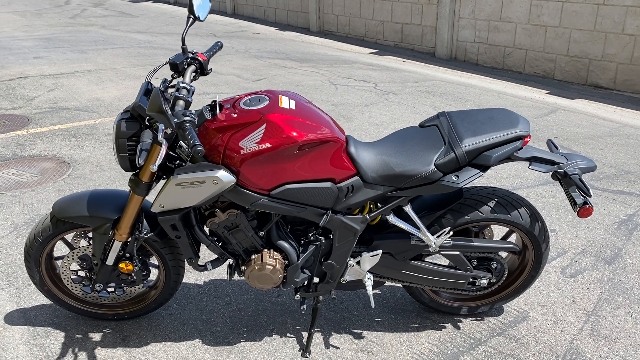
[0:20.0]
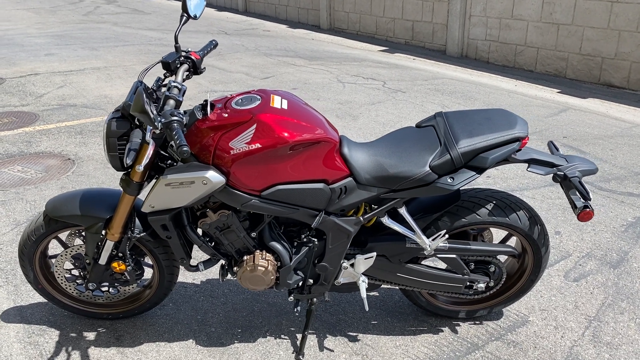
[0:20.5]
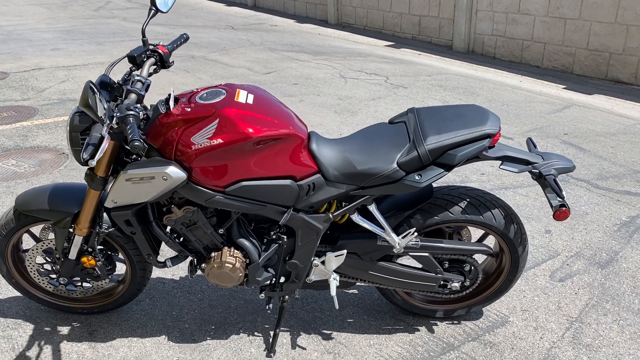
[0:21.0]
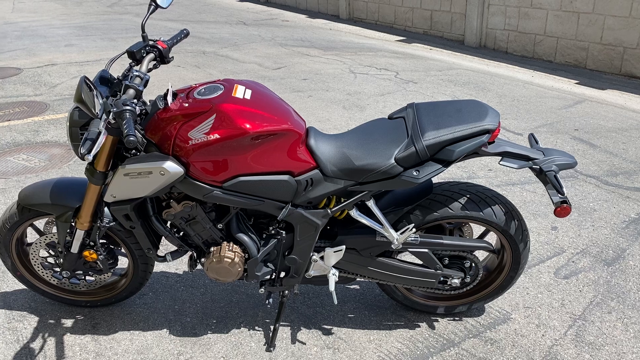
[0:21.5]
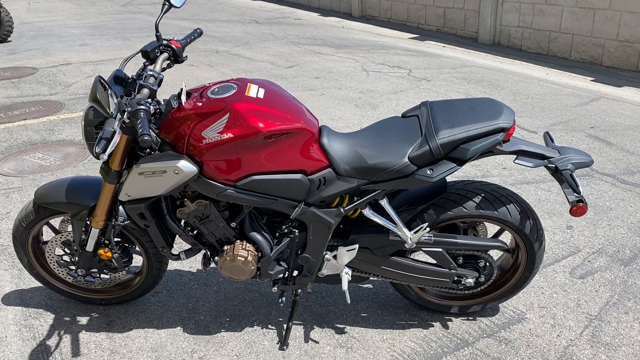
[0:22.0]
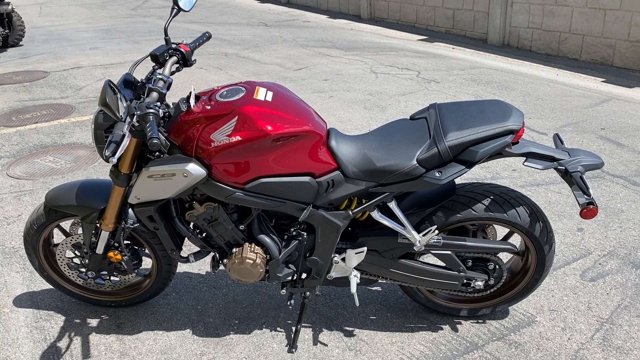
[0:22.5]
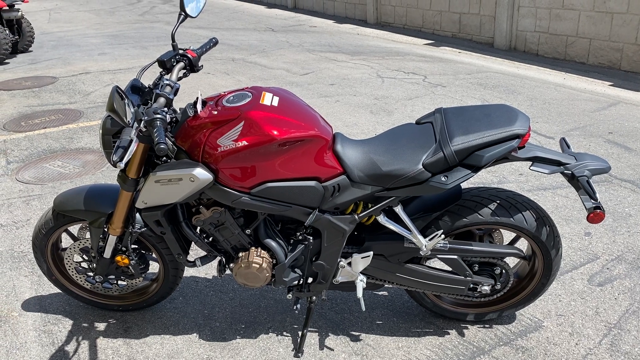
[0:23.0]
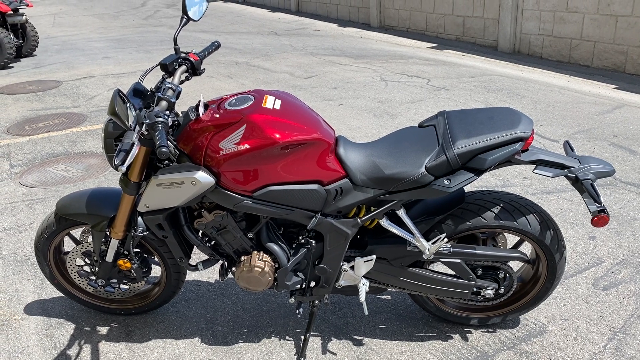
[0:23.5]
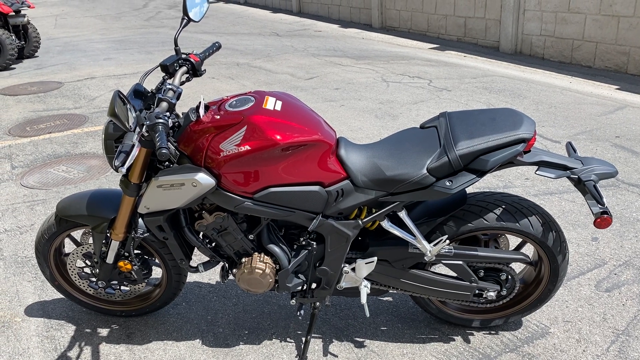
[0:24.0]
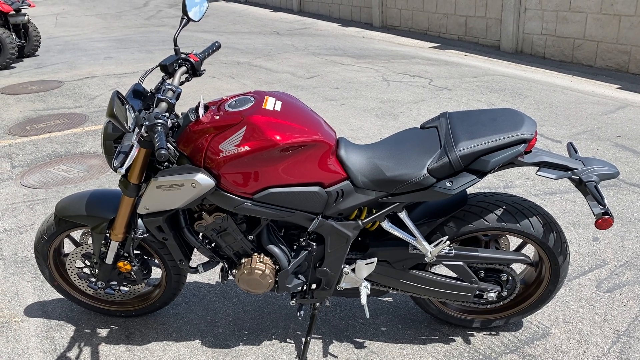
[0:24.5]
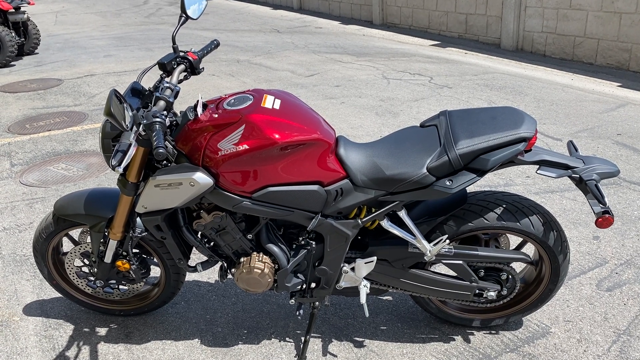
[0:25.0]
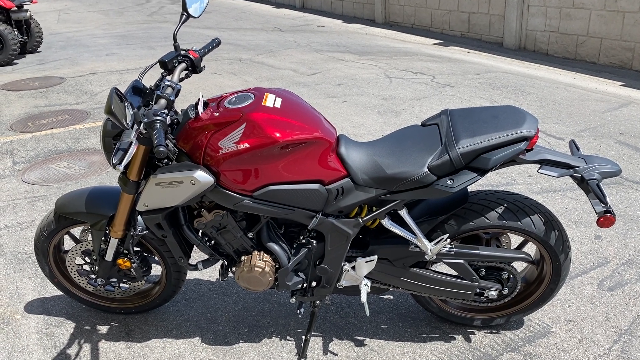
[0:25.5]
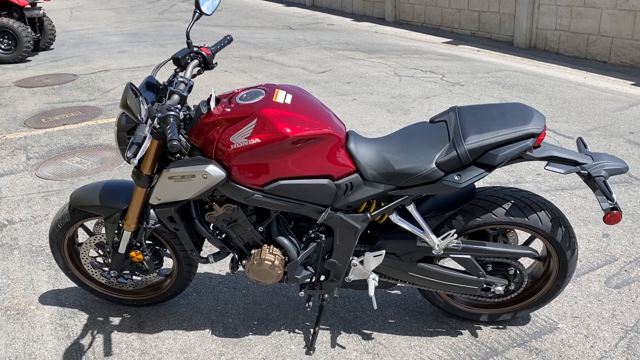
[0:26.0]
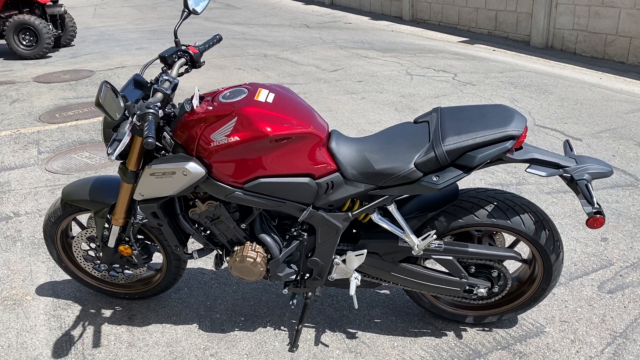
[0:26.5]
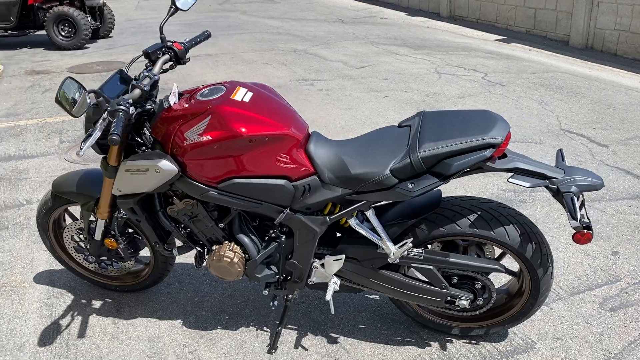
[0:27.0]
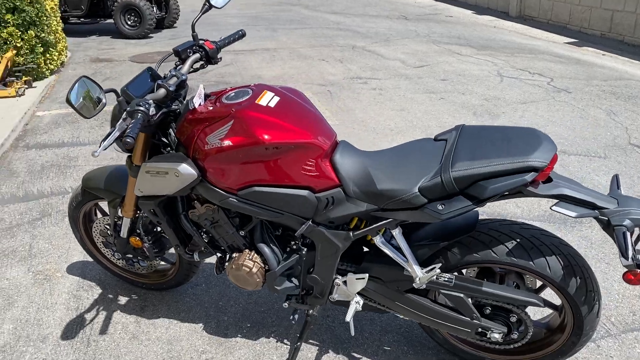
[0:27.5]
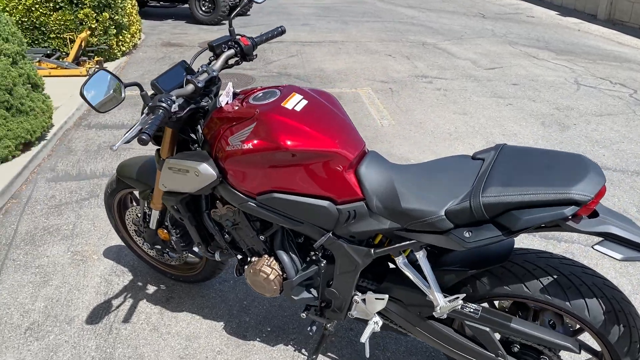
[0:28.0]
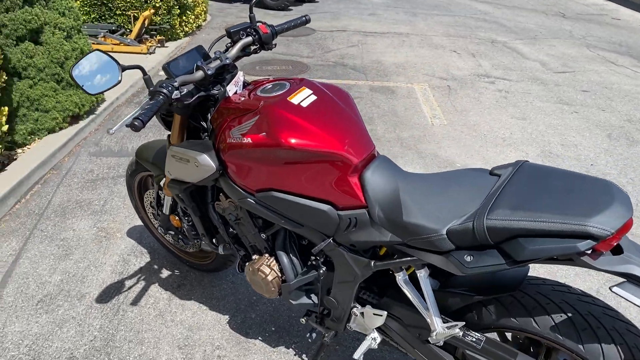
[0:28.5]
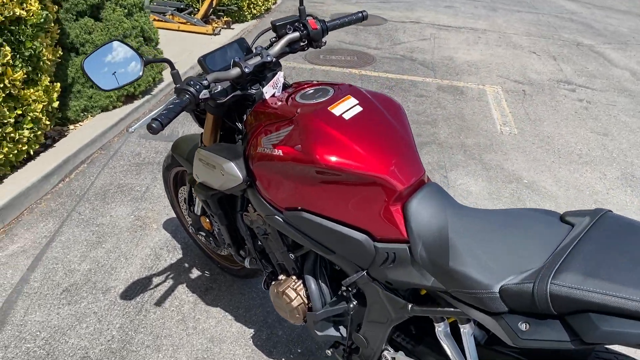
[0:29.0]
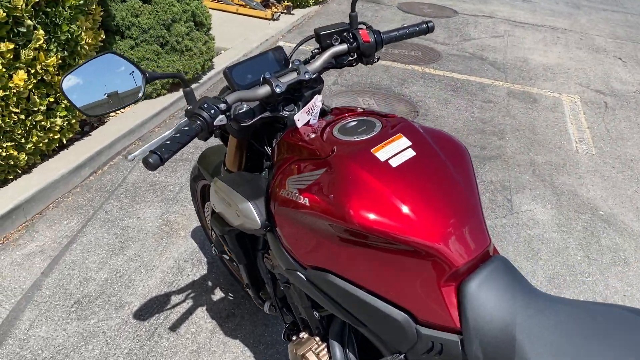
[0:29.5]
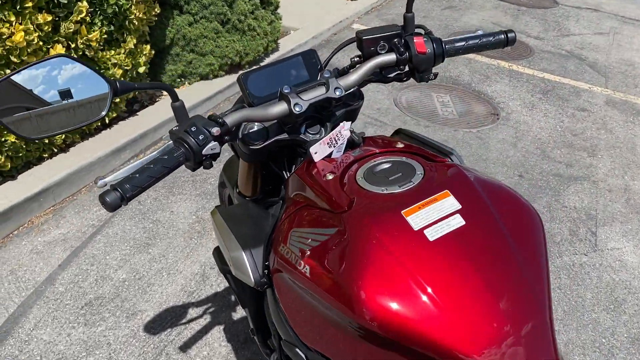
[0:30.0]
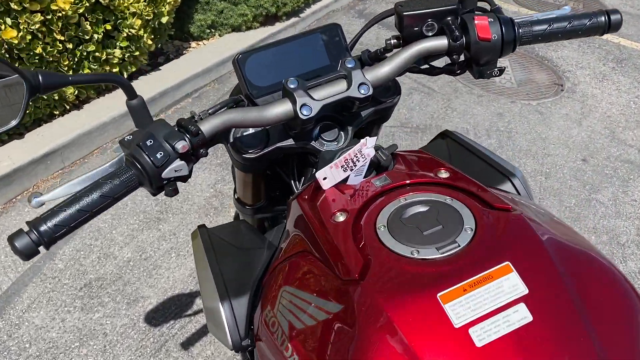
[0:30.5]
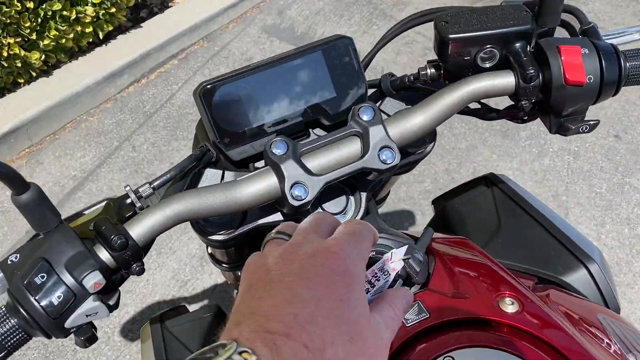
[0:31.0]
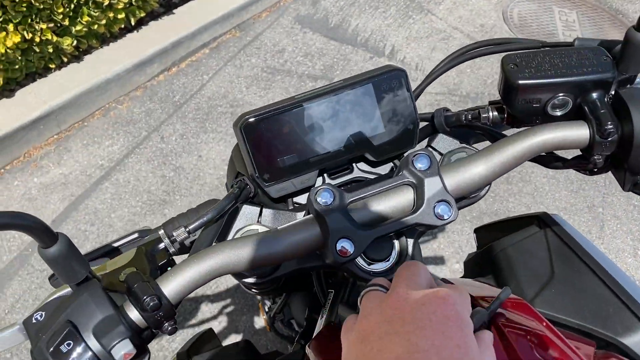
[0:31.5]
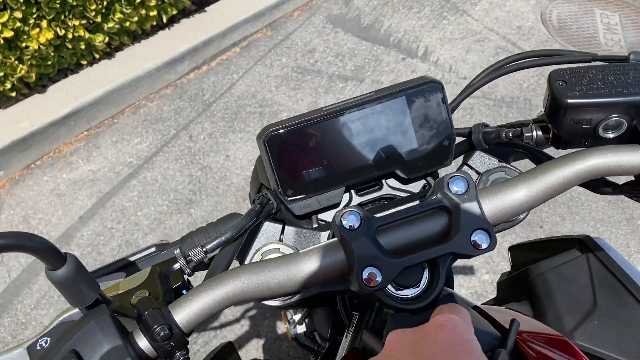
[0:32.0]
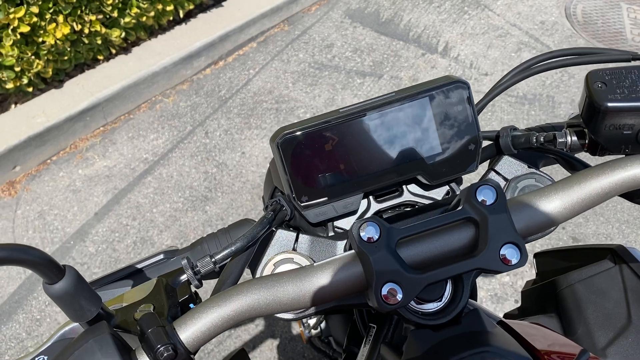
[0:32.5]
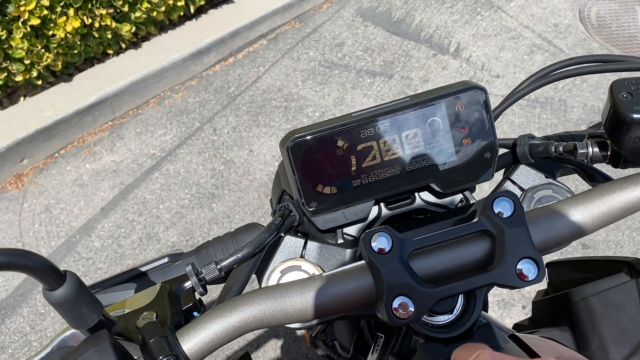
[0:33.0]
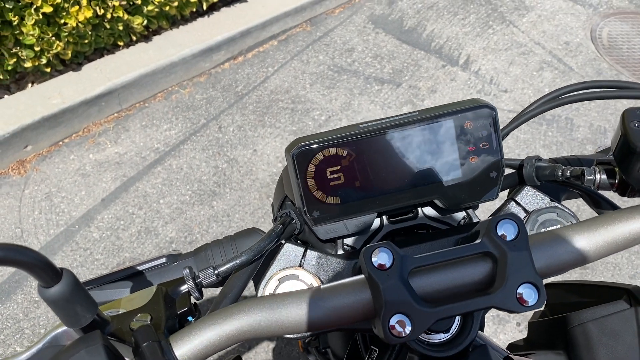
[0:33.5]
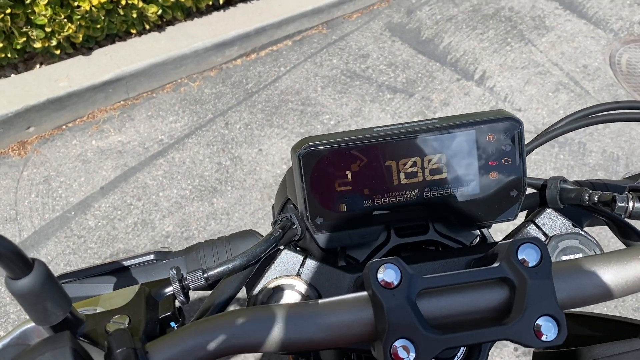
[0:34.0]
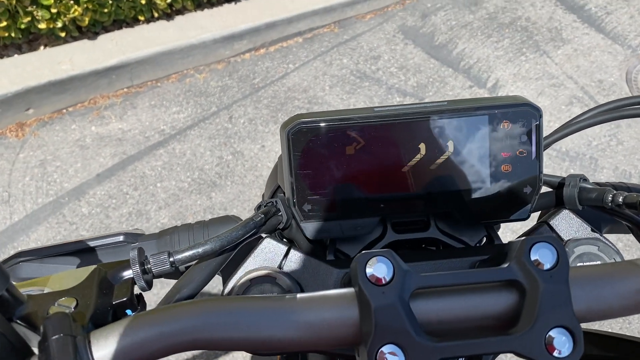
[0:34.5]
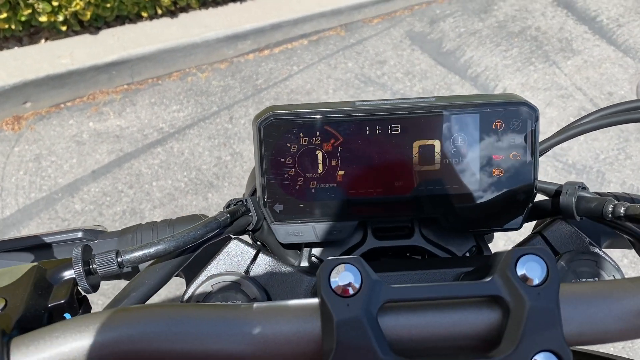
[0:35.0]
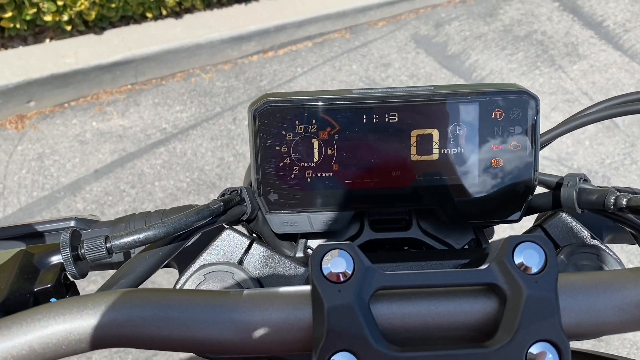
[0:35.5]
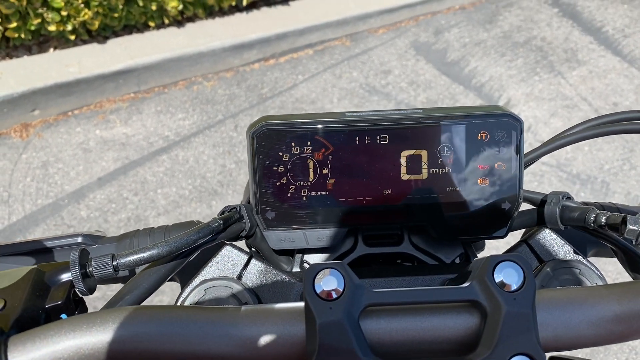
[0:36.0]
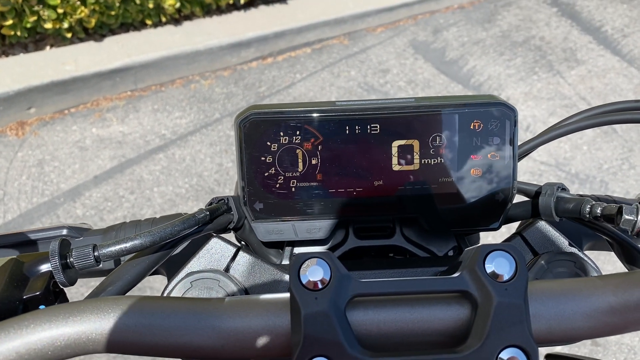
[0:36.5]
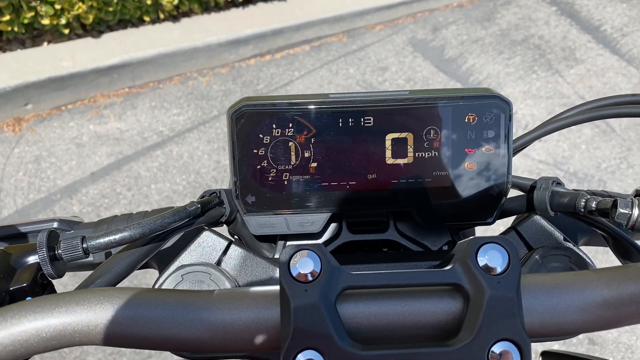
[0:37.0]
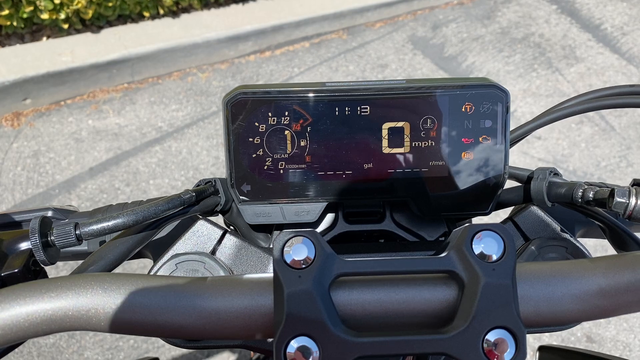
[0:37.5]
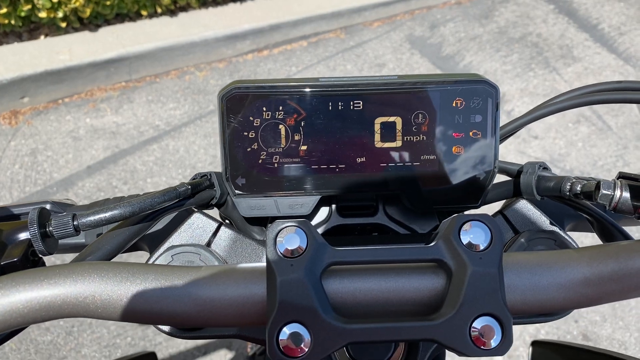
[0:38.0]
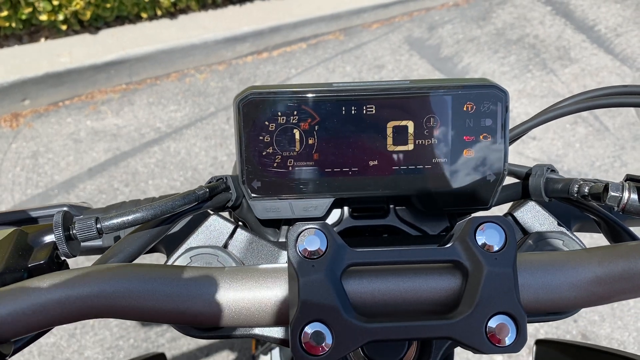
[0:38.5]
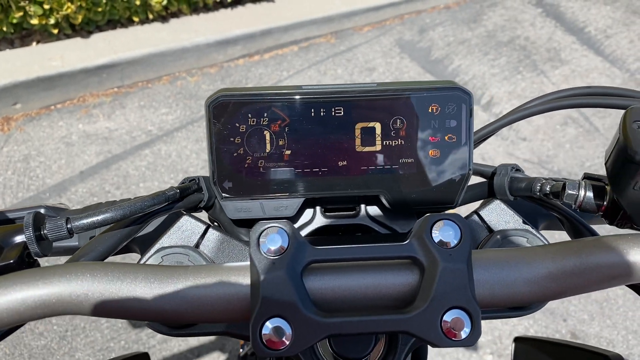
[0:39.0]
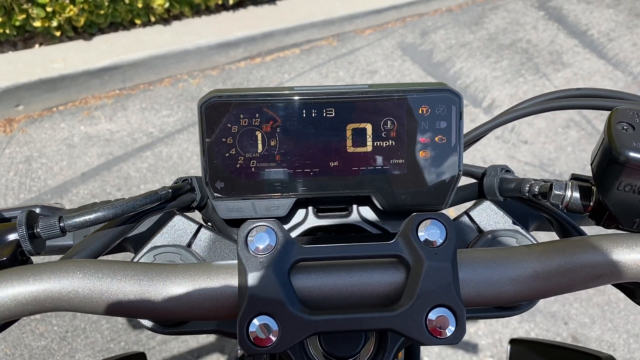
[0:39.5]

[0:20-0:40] A symbol on the motorcycle becomes visible: it is a Honda, with a wing symbol. It looks like two people could sit on it. Parts of it are black, silver and gold, and there is a red part that appears to be the gas tank. The kickstand is black, and the black chain is visible. The man gets close up to where the keys are; there is a tag on the keys, suggesting the motorcycle may be for a customer. He then shows a small dashboard that looks like a phone, apparently an actual phone hooked up to show something. It has a digital miles-per-hour reading at zero, and to the left there is a circular readout of unclear purpose, possibly some sort of odometer.